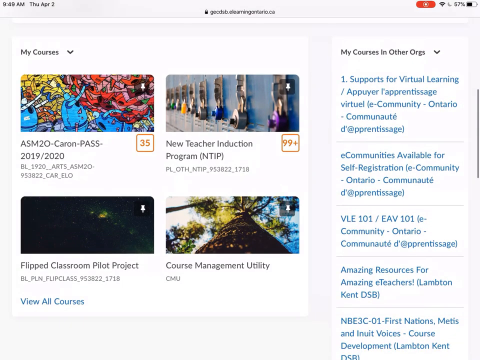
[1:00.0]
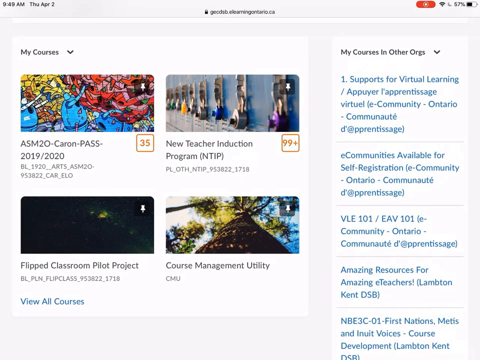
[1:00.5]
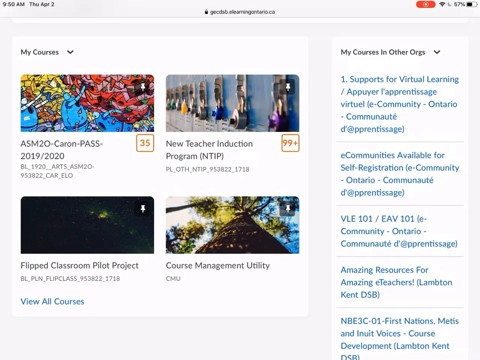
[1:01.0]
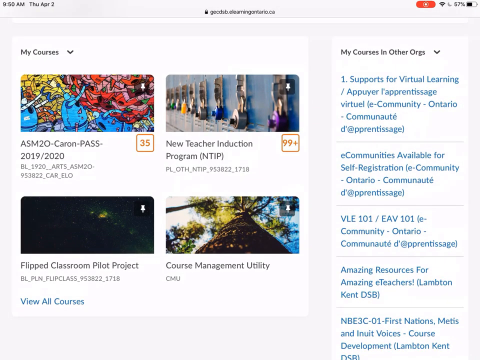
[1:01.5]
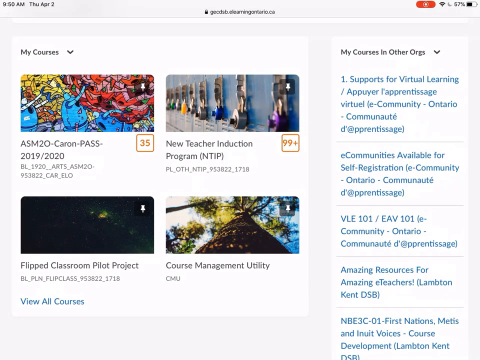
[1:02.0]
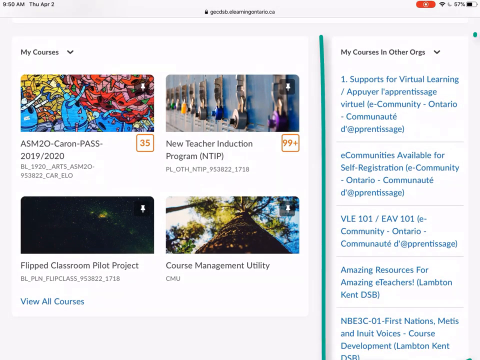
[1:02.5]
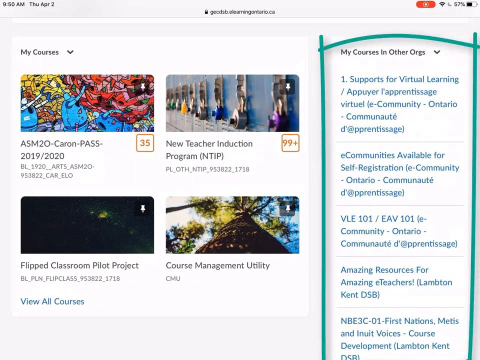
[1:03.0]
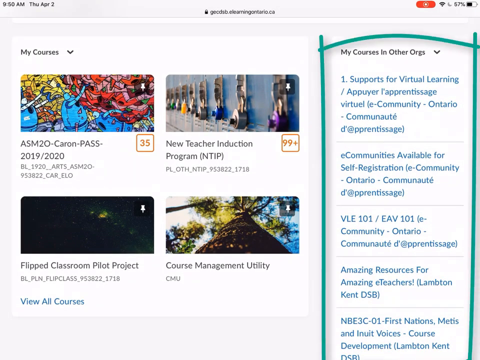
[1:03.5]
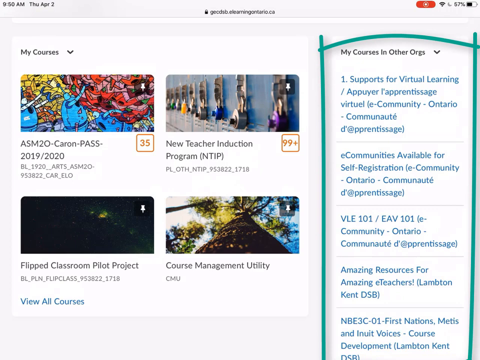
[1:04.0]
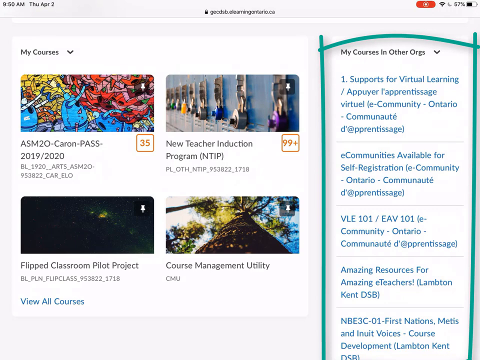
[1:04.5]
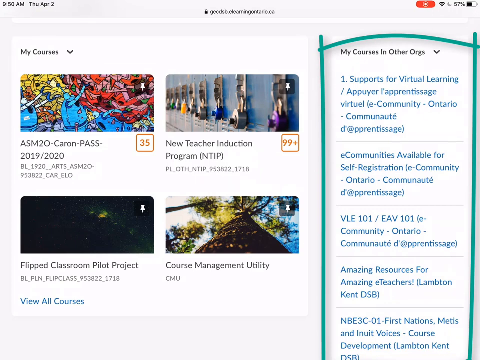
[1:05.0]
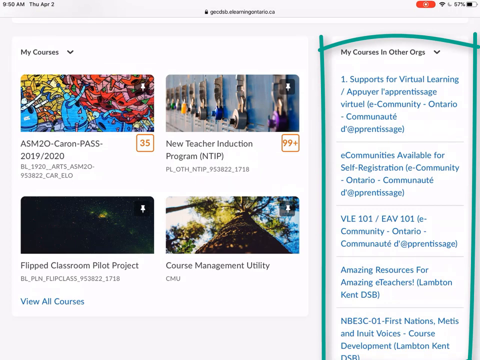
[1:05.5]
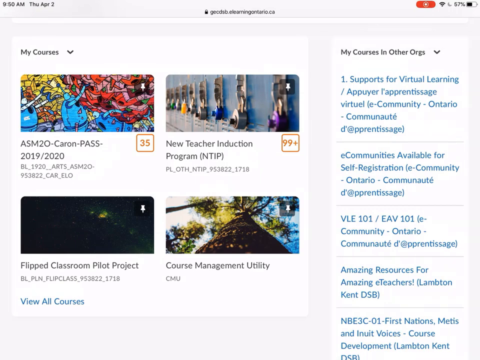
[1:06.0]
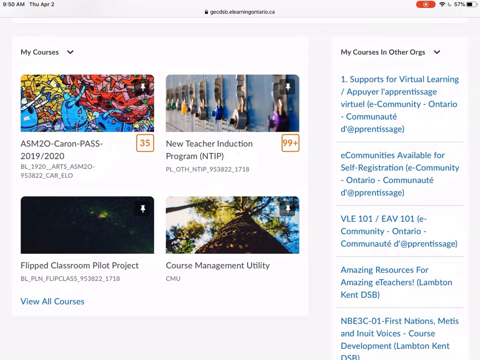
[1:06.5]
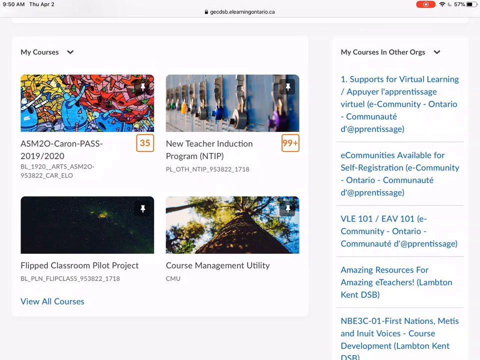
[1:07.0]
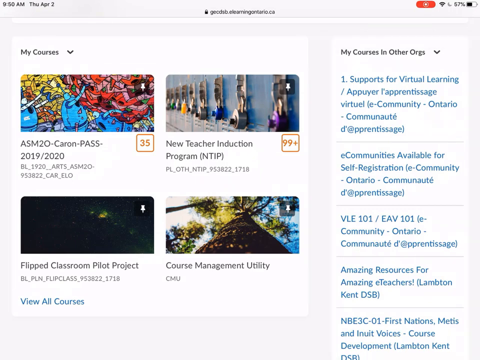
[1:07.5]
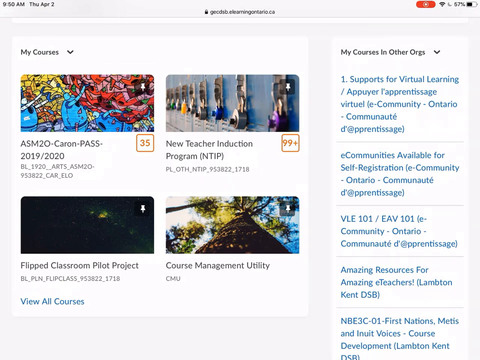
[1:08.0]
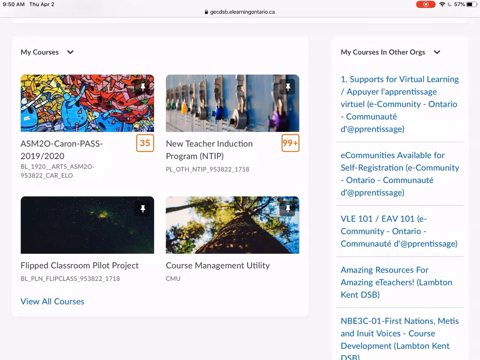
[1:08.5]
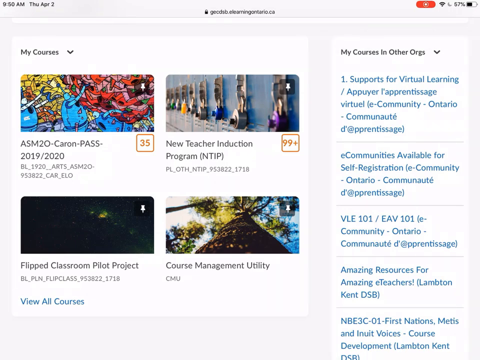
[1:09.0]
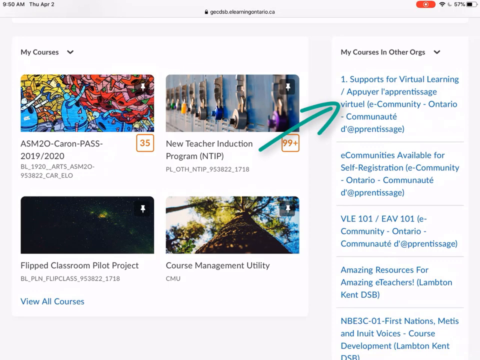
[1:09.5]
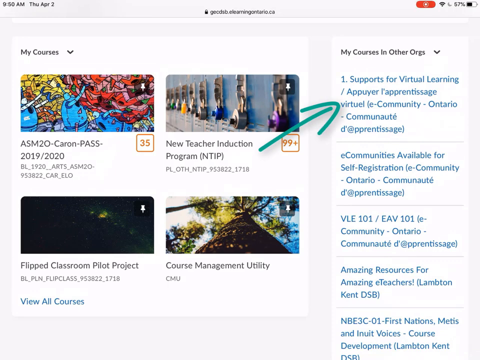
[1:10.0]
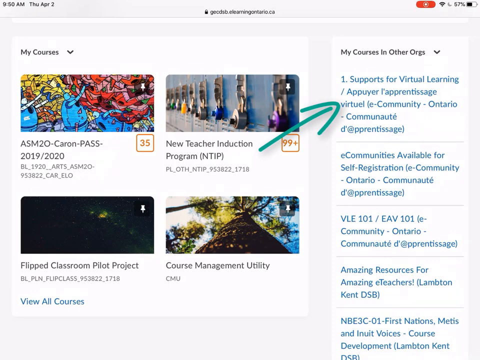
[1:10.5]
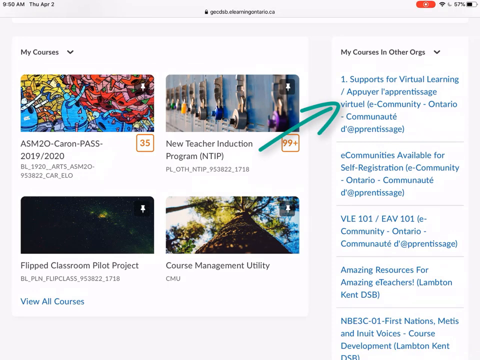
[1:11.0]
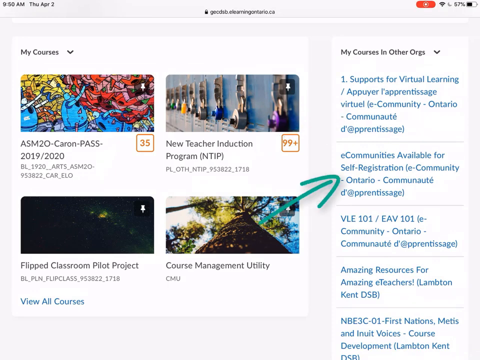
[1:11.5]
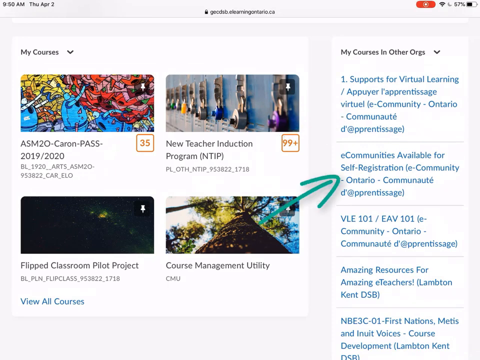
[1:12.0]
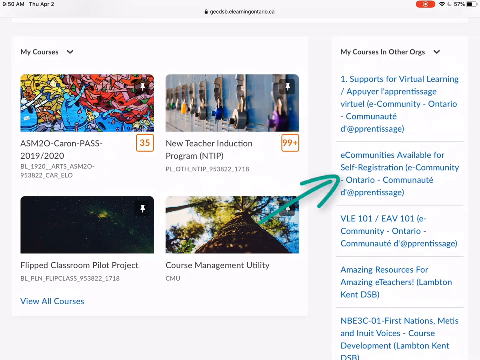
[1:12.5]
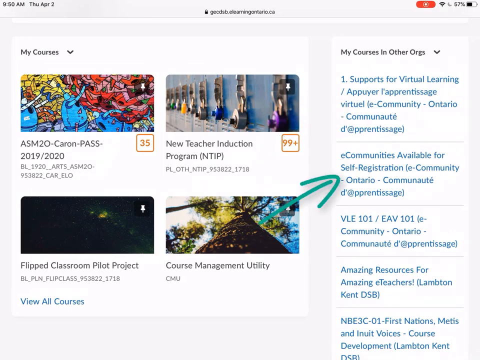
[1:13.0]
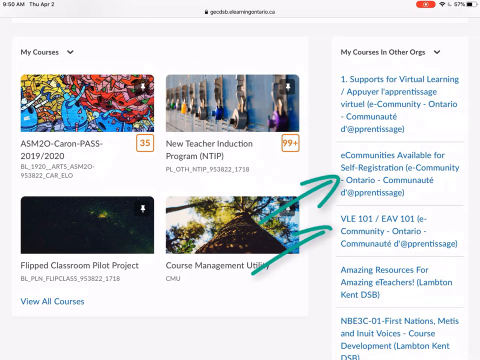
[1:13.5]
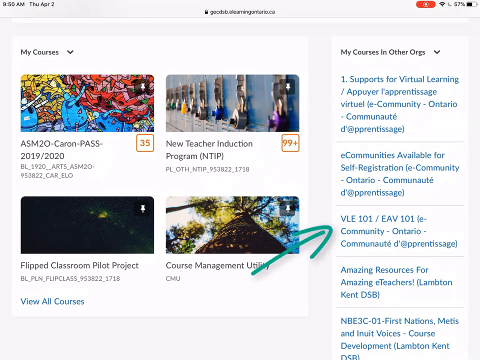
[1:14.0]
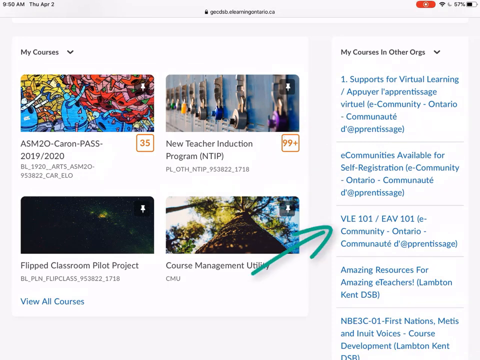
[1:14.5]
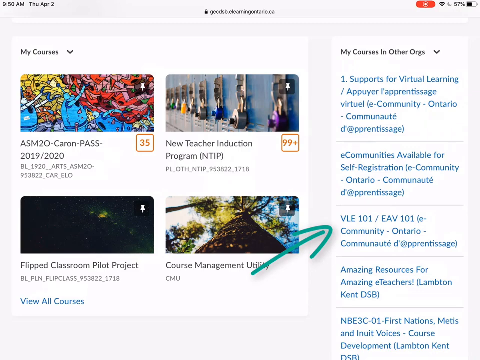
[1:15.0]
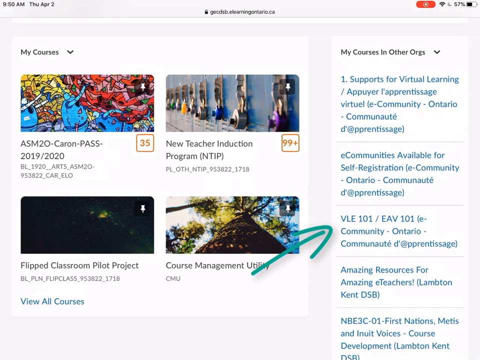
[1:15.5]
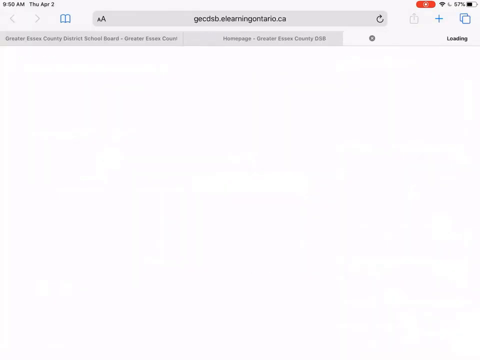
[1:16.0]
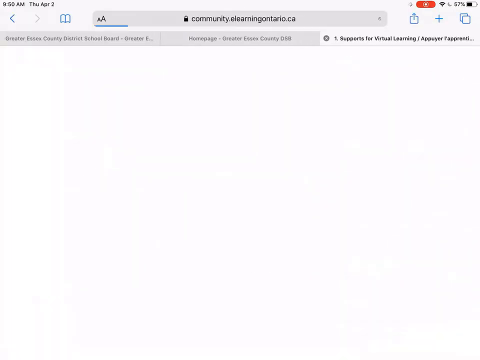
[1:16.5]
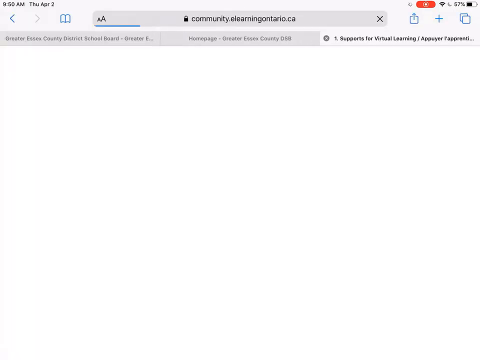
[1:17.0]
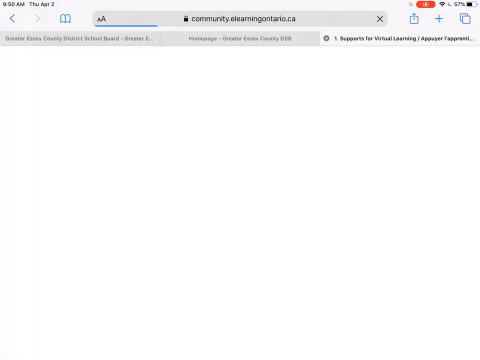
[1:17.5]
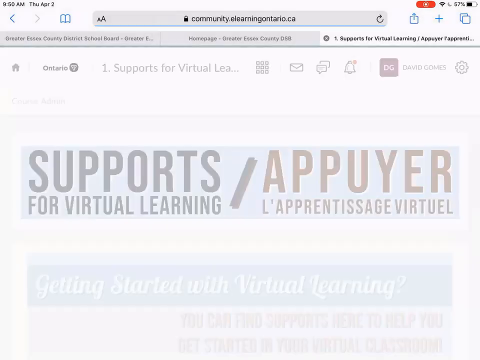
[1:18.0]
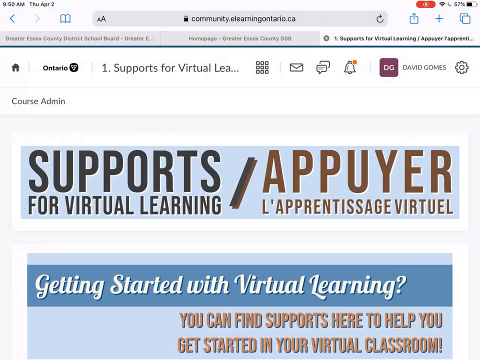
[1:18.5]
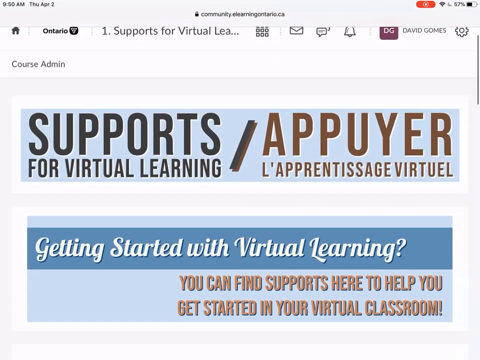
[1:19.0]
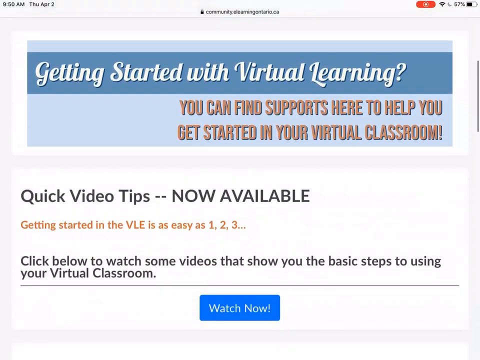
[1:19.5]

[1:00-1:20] A web page of the school website is shown. On the left-hand side are four rectangular areas with illustrations in them, listing four different projects that can be clicked on. On the right-hand side, a vertical column reads "My Courses and Other Orgs" at the top. The first entry is "Supports for Virtual Learning," followed by wording in French. Below that is "eCommunities Available for Self-Registration," also followed by text in French. Next is "VLE 101, EAV 101," followed by French text. The next reads "Amazing Resources for Amazing eTeachers, Lambda and Kent, DSB," and the last reads "First Nations," with those words also in French. The column is first outlined in green, and then green arrows are drawn on the side, pointing to each section in turn.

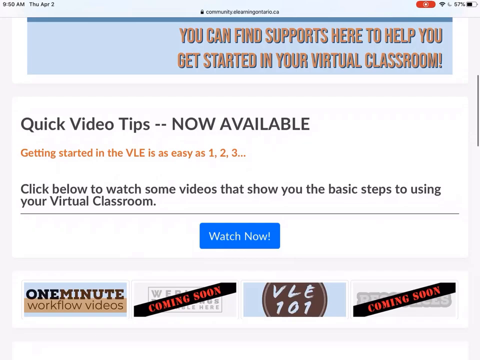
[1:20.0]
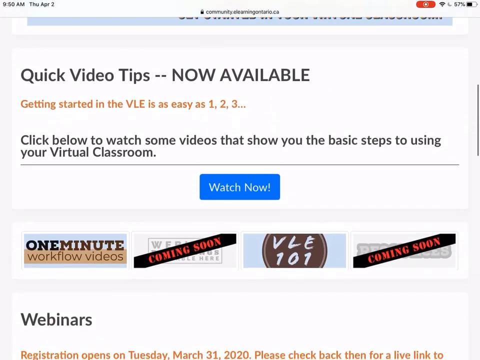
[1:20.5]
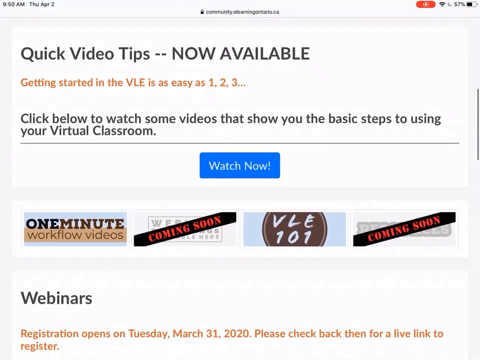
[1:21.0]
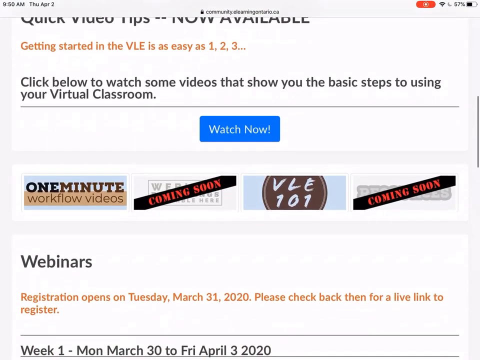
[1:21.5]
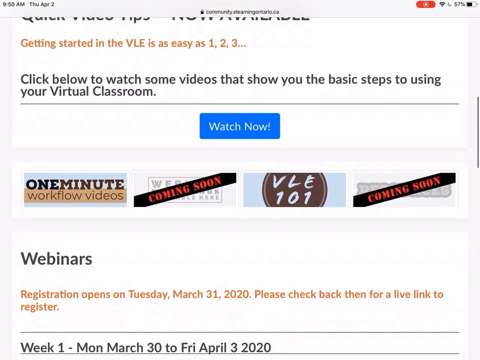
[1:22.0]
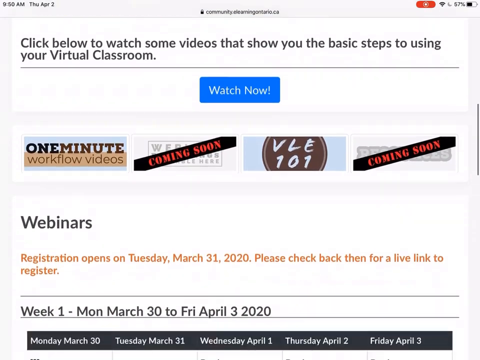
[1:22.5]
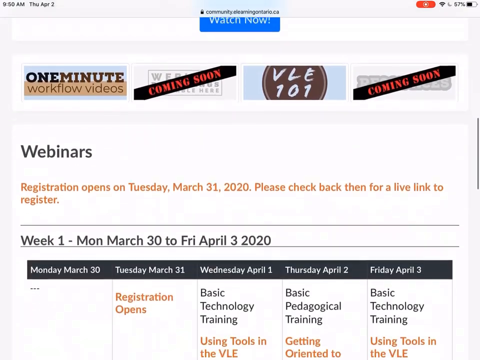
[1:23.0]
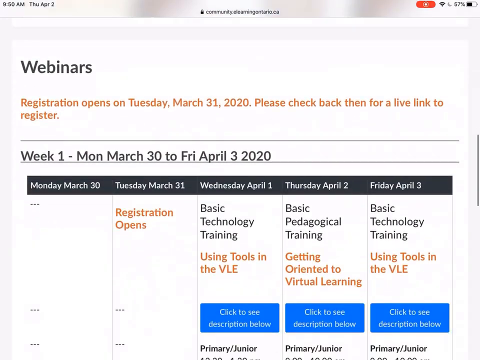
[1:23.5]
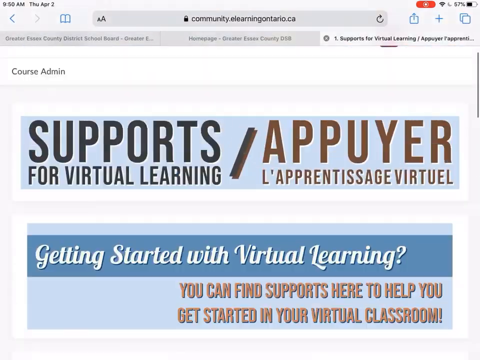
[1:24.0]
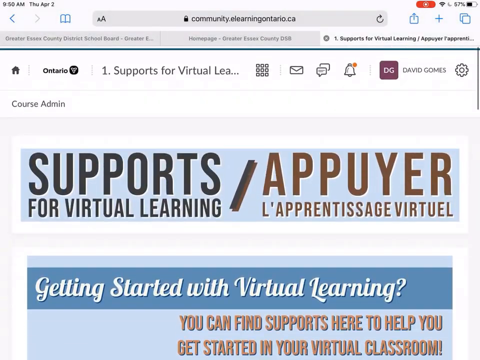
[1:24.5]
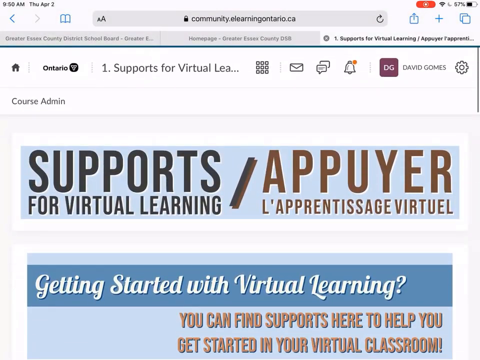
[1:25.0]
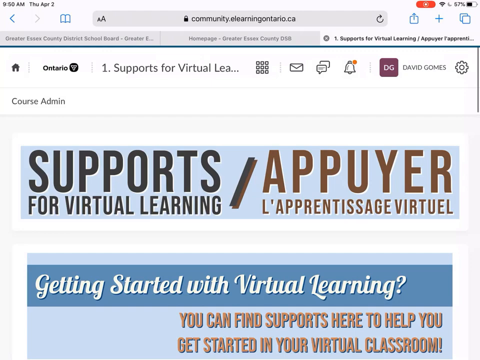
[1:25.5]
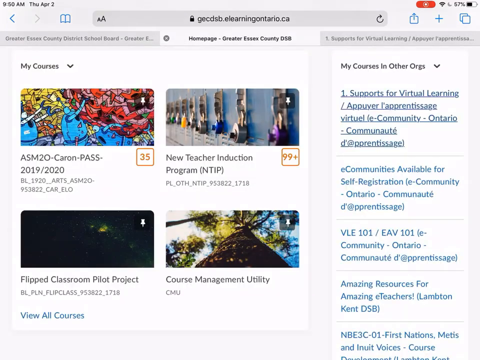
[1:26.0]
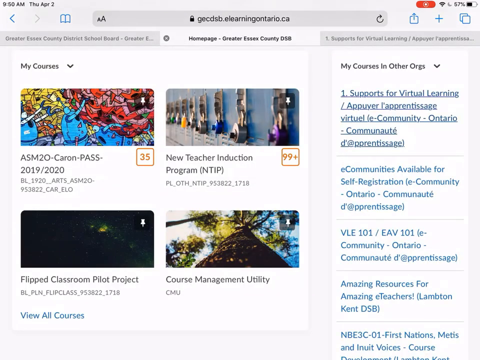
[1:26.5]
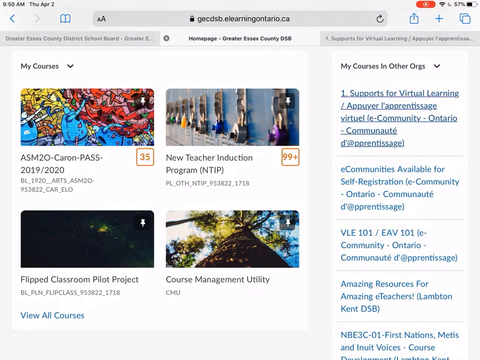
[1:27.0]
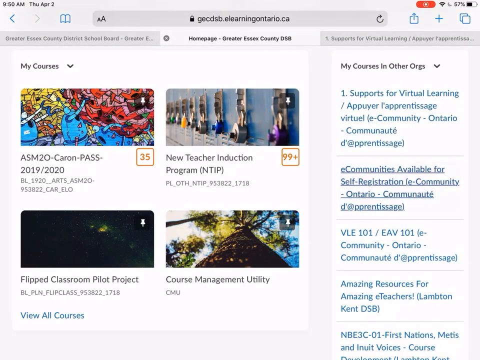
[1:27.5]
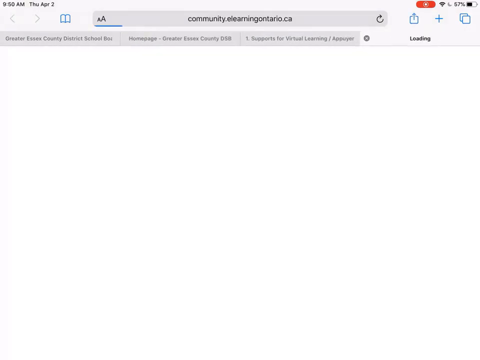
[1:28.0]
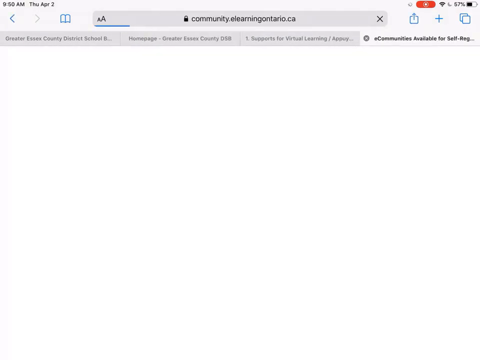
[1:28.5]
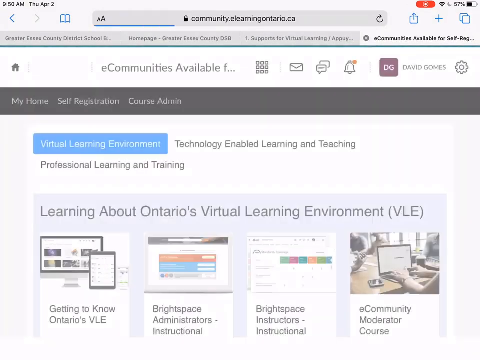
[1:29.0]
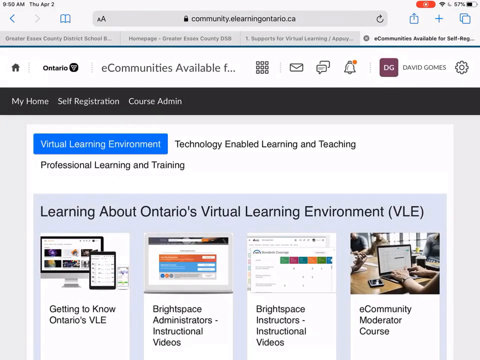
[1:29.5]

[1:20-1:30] A web page shows a blue banner at the top reading "you can find supports here to help you get started in your virtual classroom." Below that is the headline "quick video tips now available," followed by "getting started in the VLE is as easy as 1, 2, 3" and the text "click below to watch some videos that show you the basic steps to using your virtual classroom." A blue "watch now" button is below that. From left to right, items read "one-minute workflow videos," then one crossed out with a "coming soon" banner, then "VLE 101," then another crossed out with a "coming soon" banner. As the person scrolls, the next section reads "webinars. Registration opens on Tuesday, March 31st, 2020. Please check back then for a live link to register." Below that is a calendar schedule beginning on March 1st.